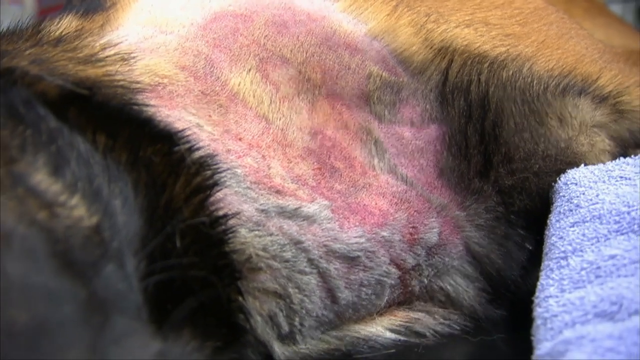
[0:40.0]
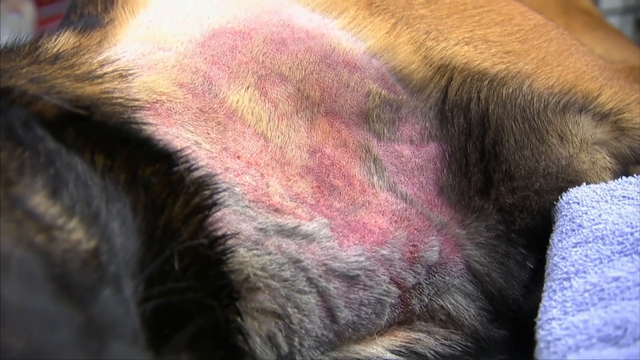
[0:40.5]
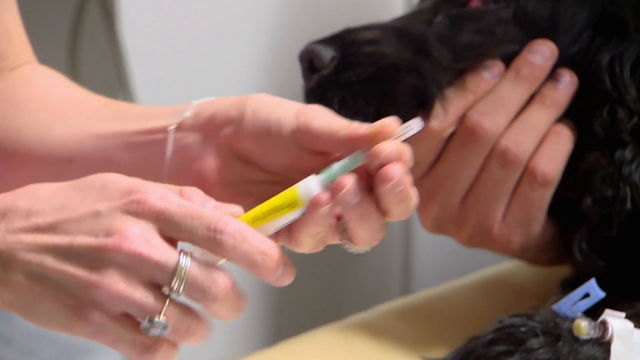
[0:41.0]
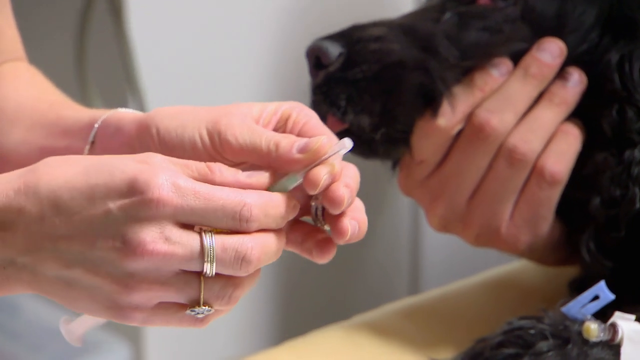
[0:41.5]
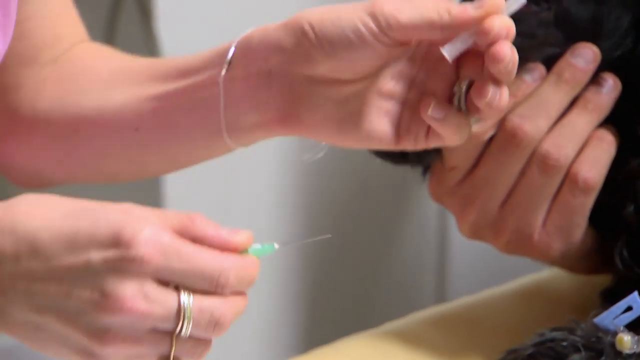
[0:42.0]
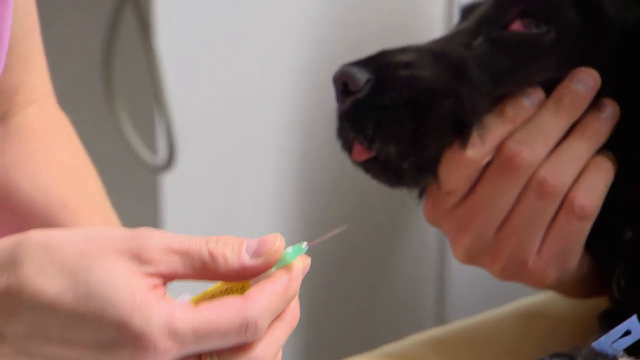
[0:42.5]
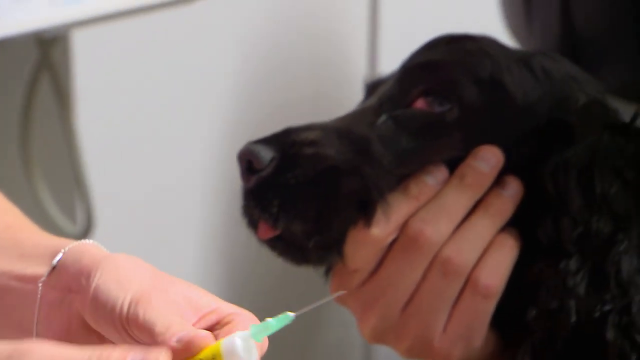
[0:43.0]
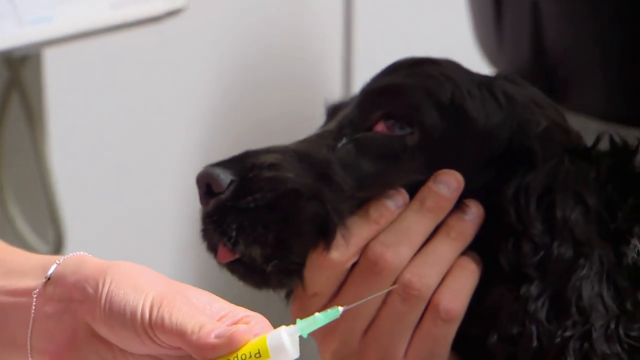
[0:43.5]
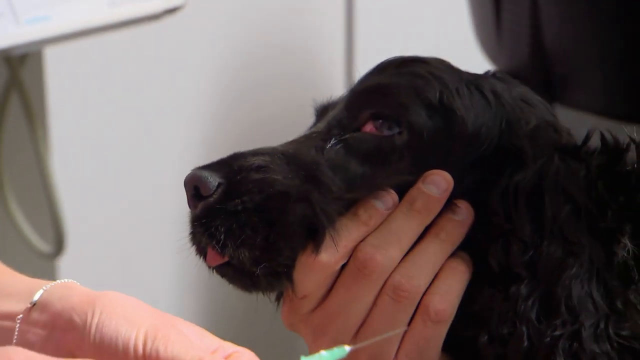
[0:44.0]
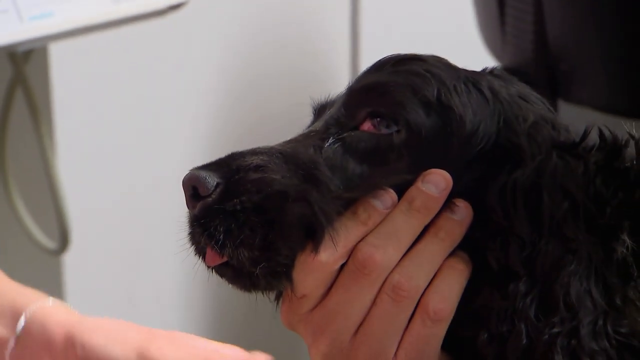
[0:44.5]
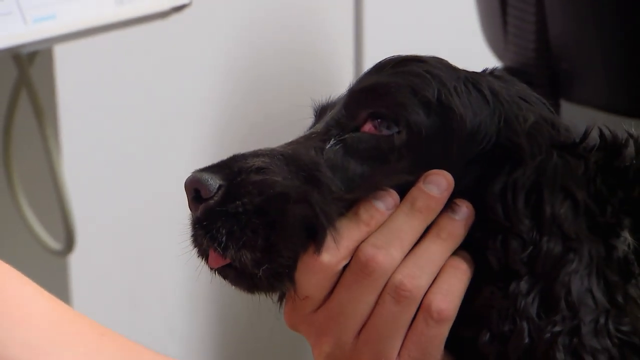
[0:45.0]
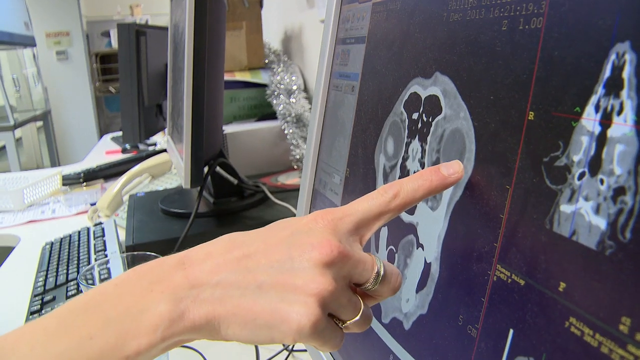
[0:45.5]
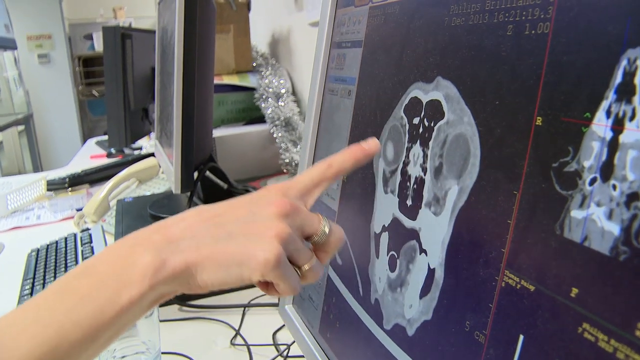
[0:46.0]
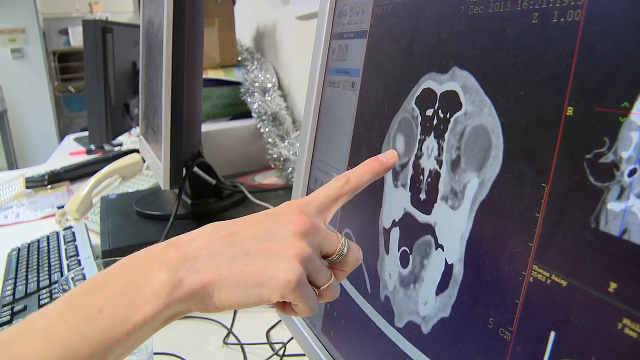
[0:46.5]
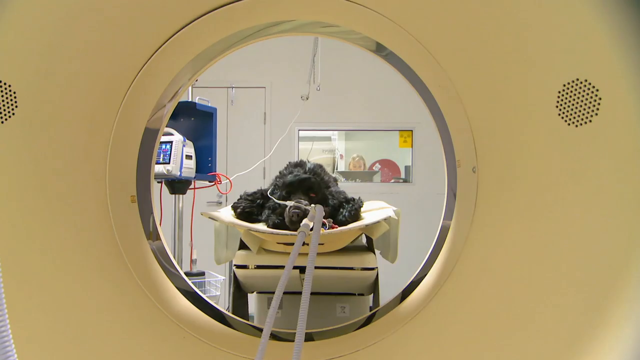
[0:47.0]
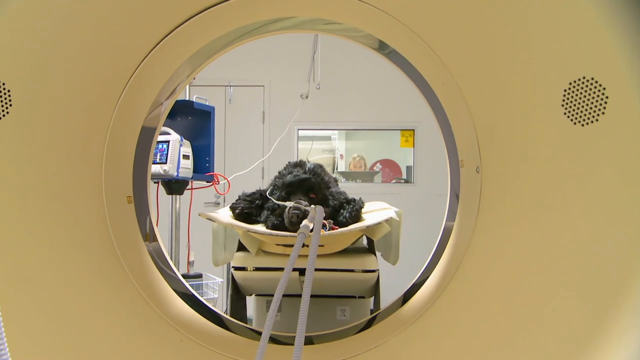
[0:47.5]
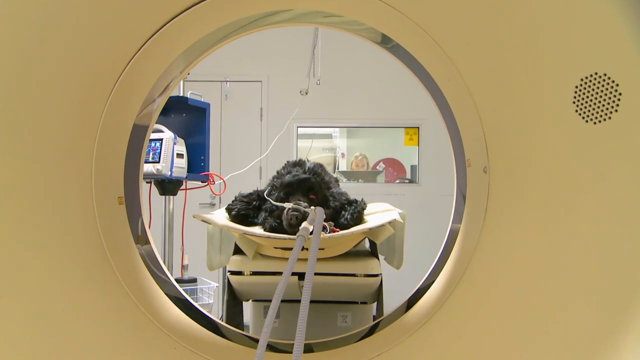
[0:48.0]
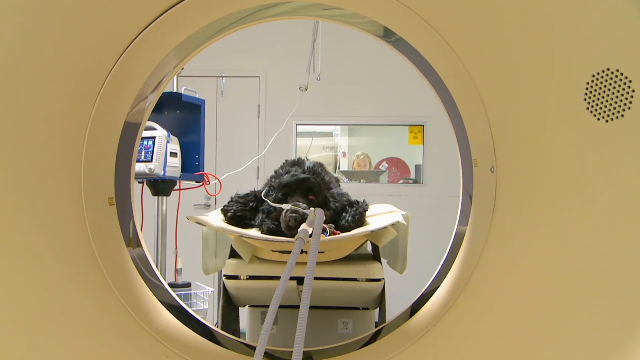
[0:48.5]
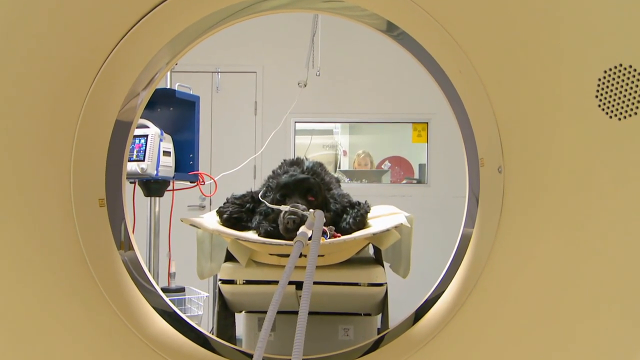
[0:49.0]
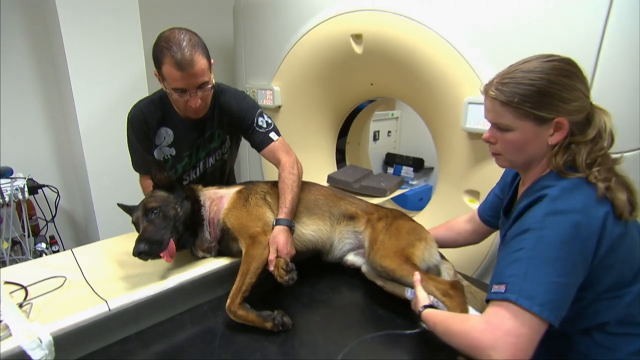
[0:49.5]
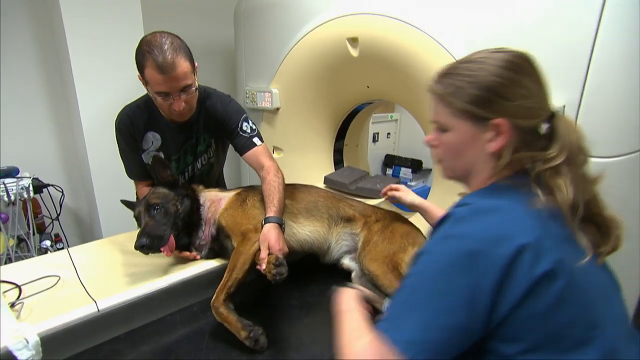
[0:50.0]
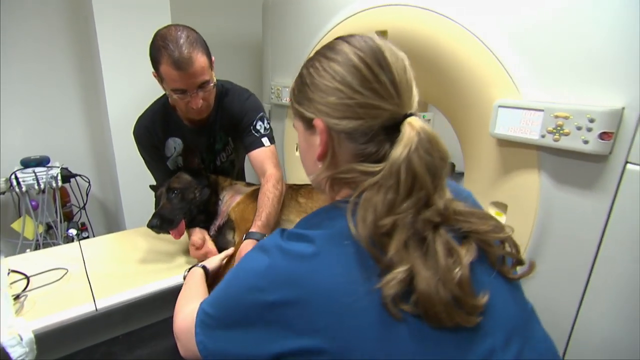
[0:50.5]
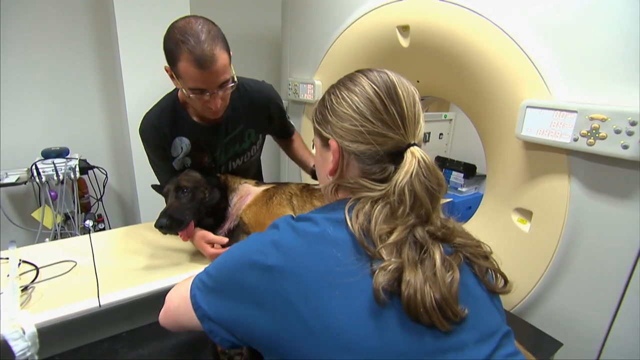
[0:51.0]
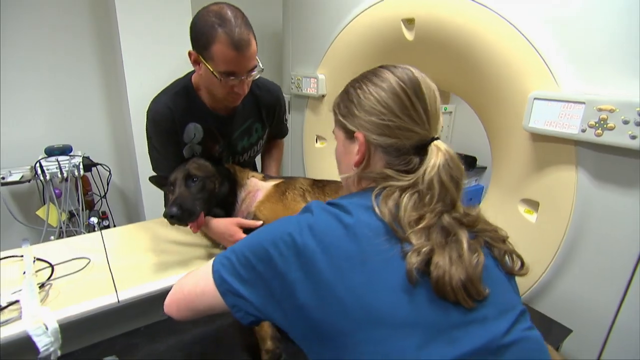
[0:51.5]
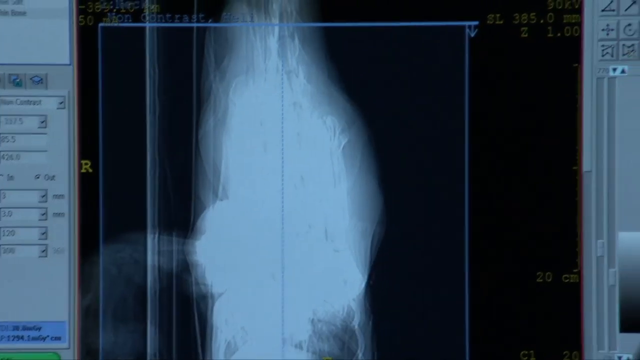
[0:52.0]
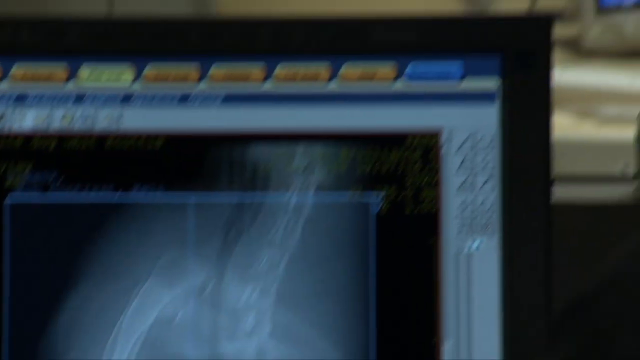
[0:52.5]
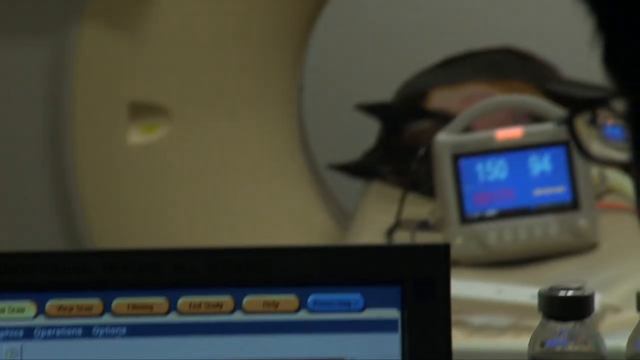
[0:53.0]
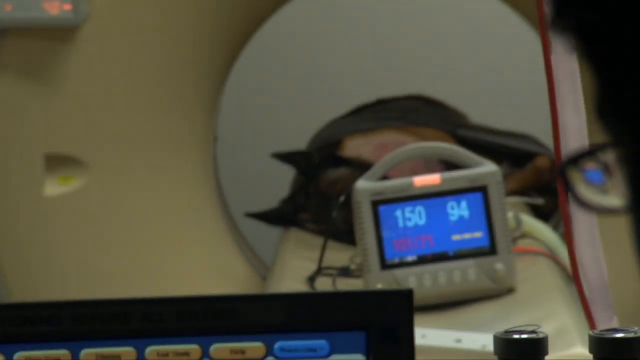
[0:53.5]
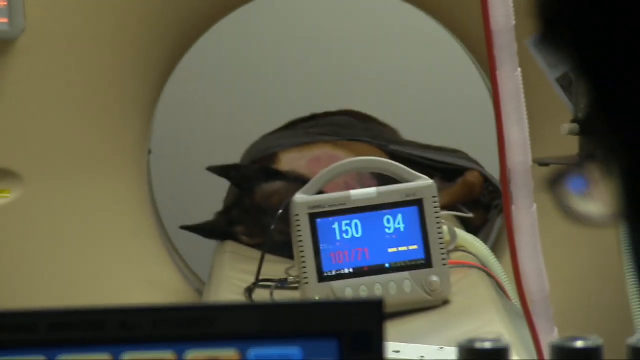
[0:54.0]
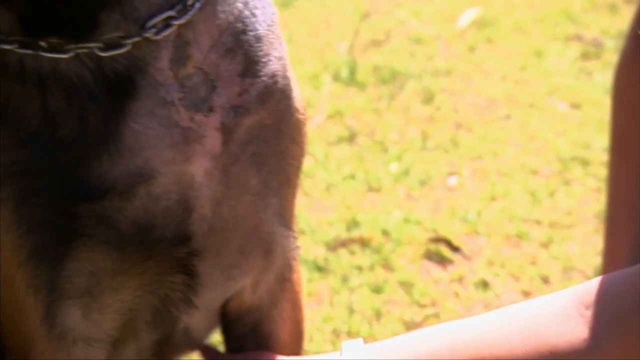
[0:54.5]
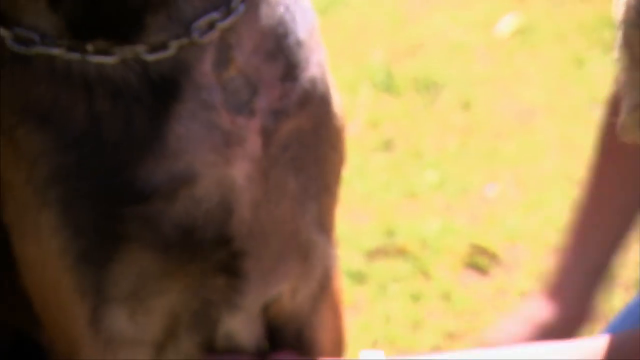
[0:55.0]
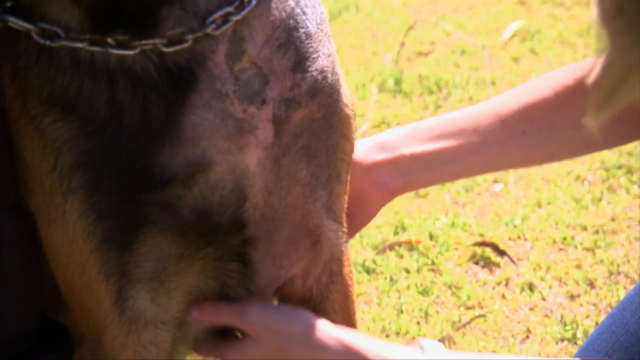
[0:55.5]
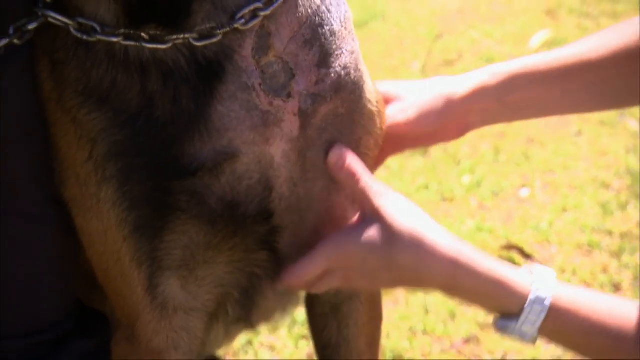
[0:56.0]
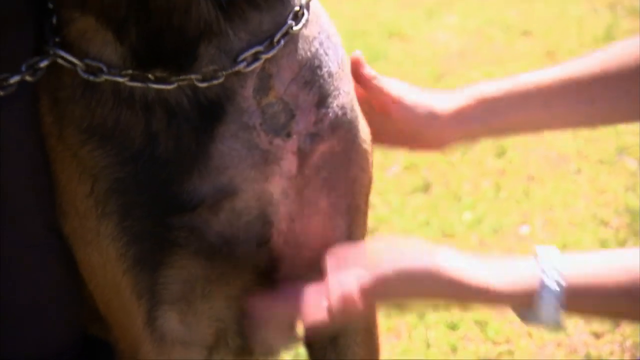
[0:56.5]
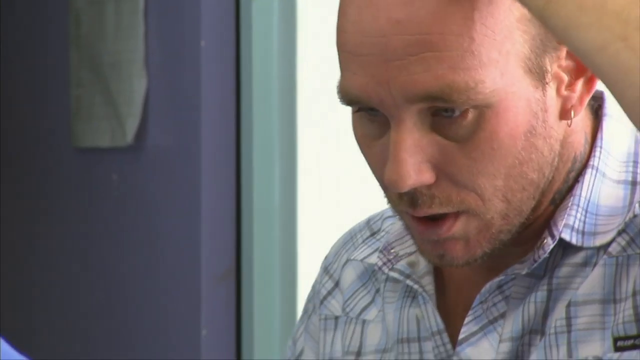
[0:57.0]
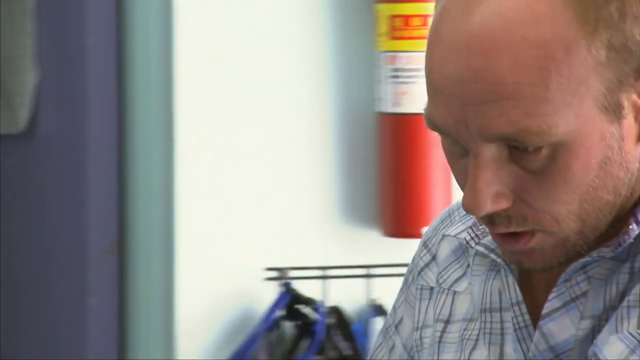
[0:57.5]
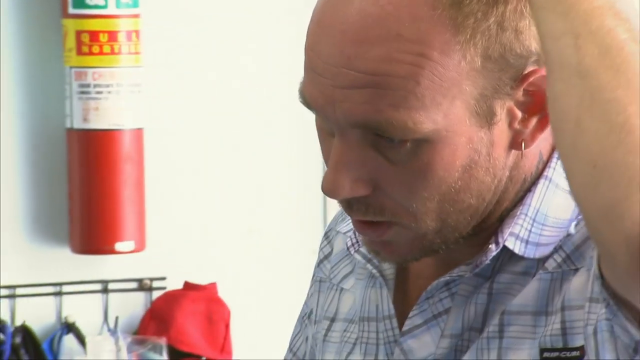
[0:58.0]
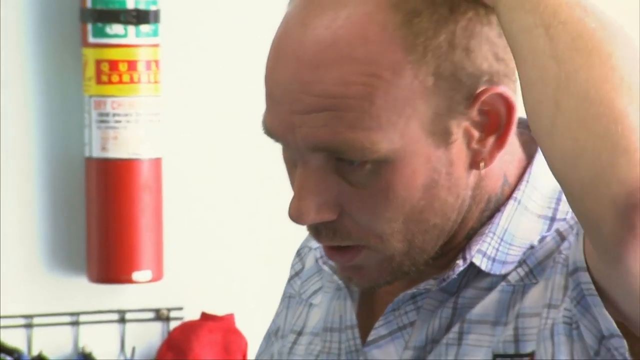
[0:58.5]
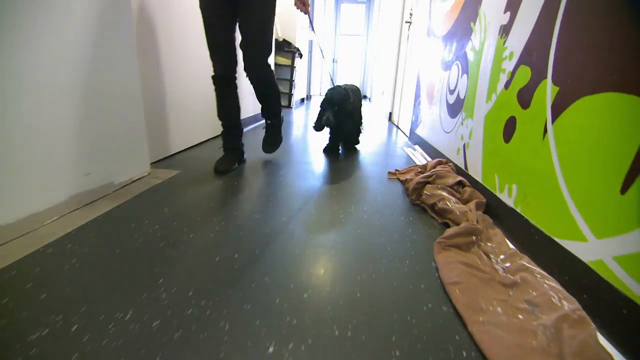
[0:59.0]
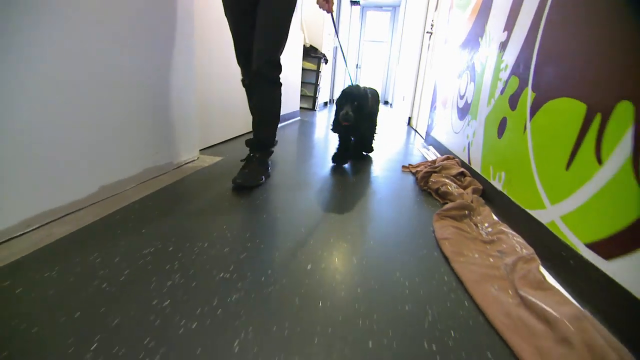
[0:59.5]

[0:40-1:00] The dog has a red mark on the side of its chest. People are trying to understand what is wrong, and the dog's owner, a man, looks worried and is taking his dog back home. A woman gives the dog a big injection.